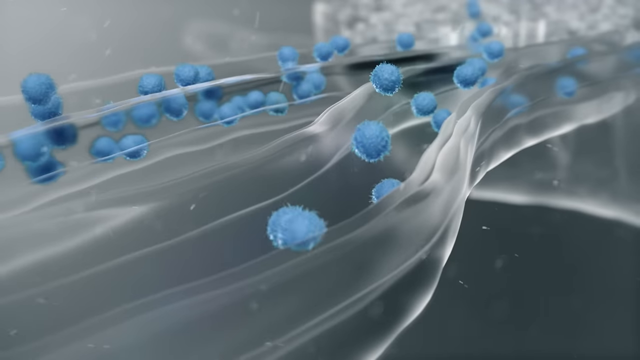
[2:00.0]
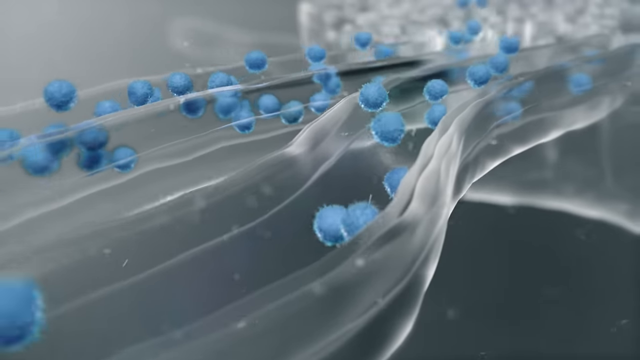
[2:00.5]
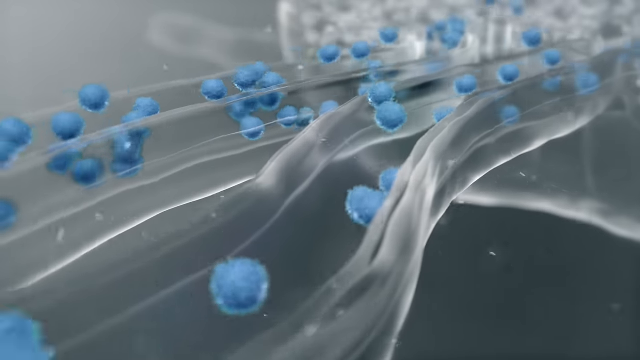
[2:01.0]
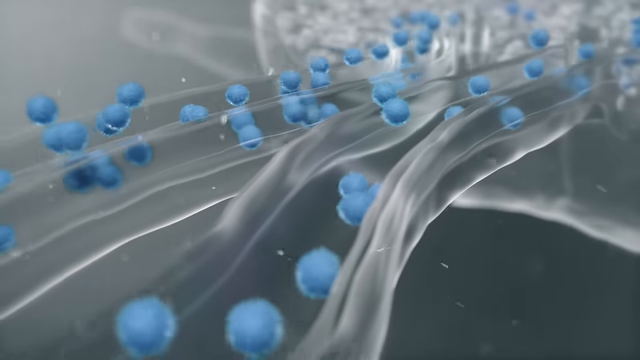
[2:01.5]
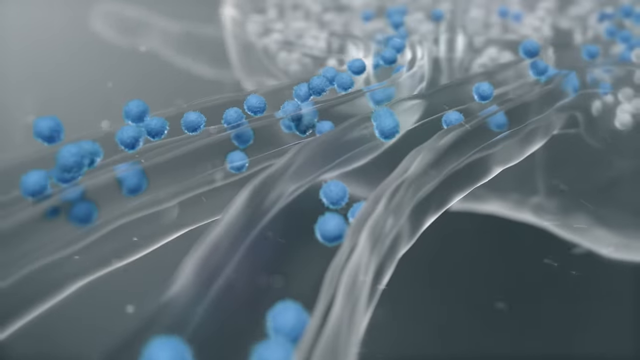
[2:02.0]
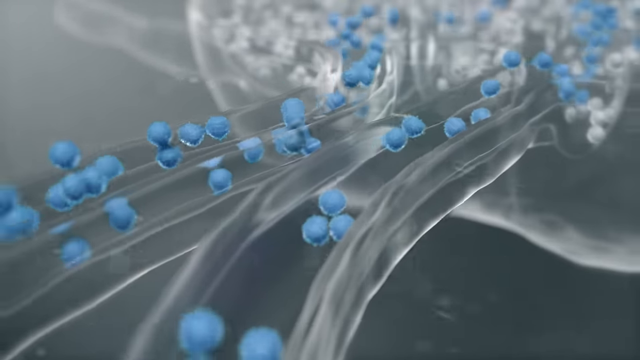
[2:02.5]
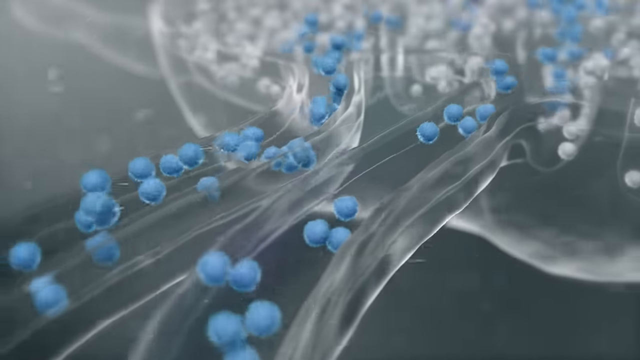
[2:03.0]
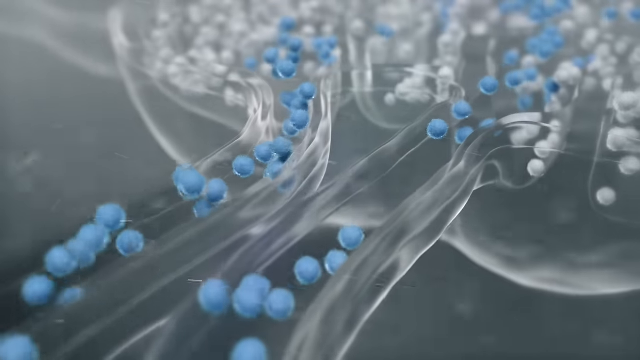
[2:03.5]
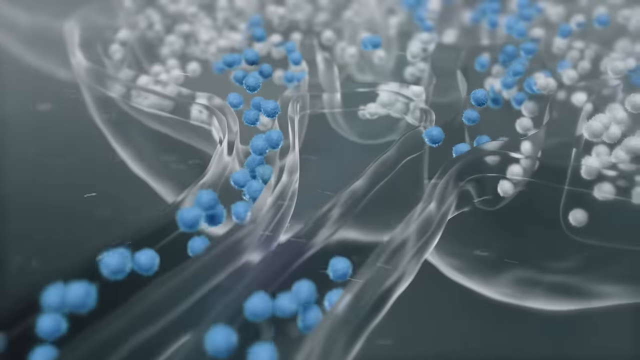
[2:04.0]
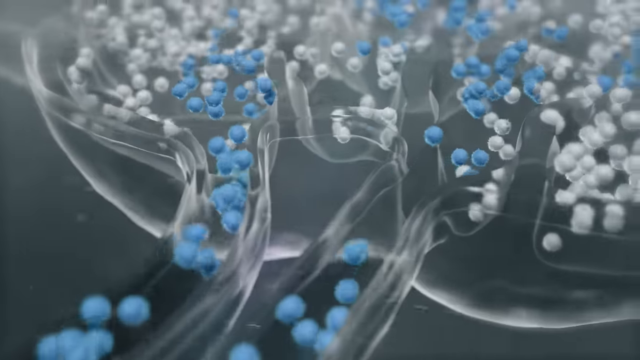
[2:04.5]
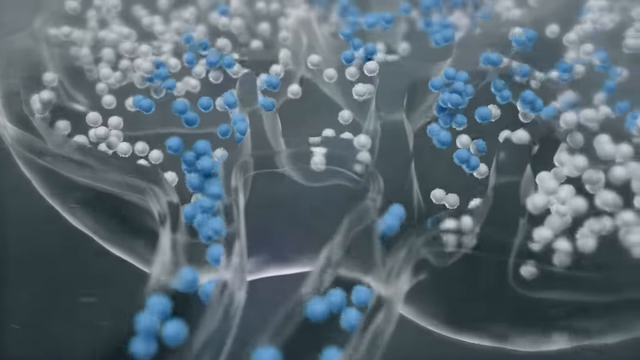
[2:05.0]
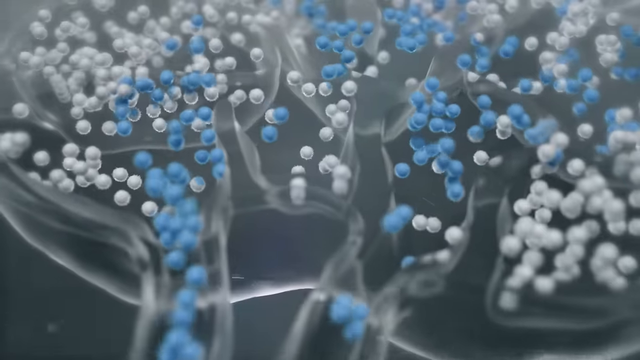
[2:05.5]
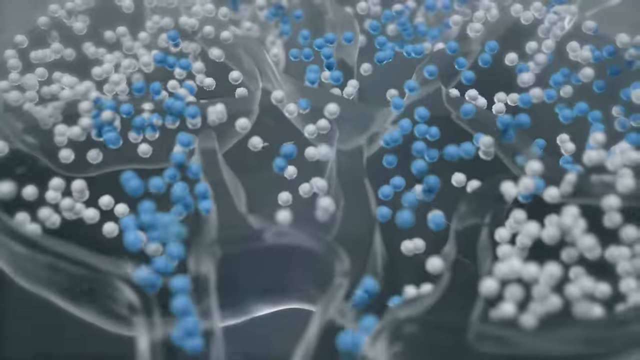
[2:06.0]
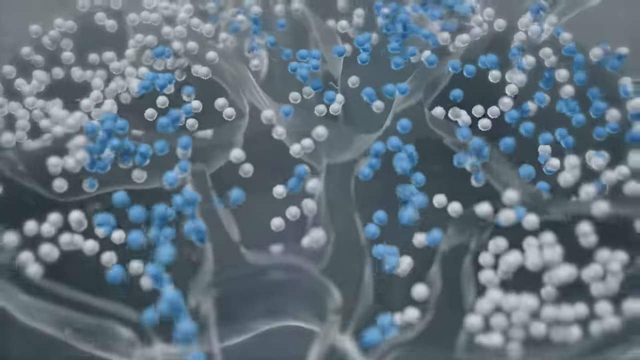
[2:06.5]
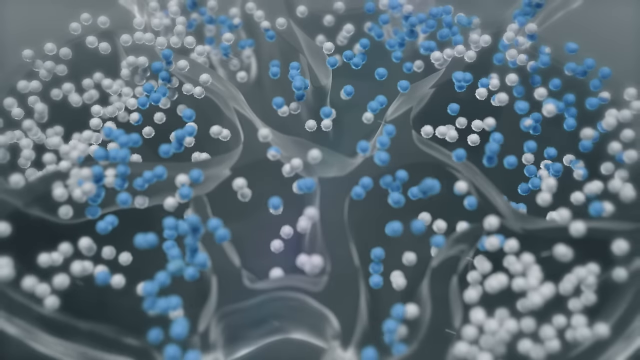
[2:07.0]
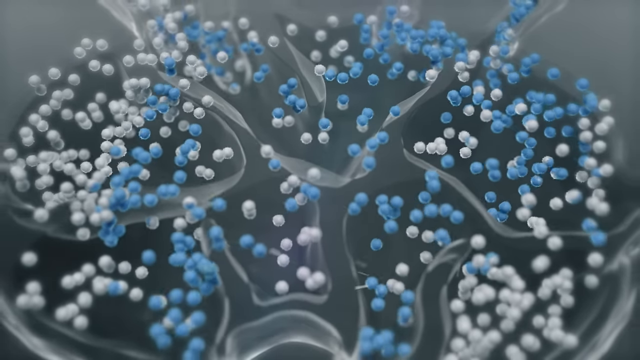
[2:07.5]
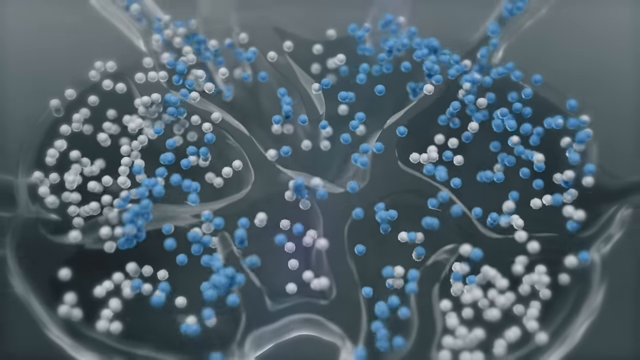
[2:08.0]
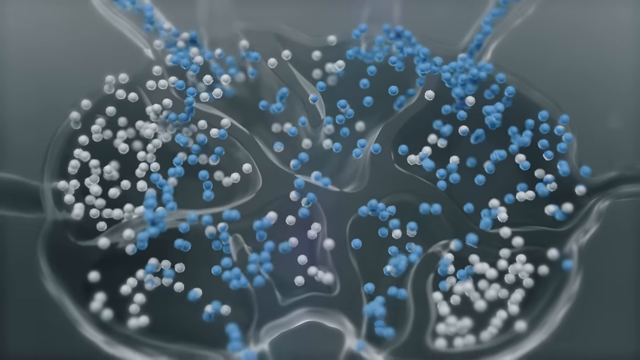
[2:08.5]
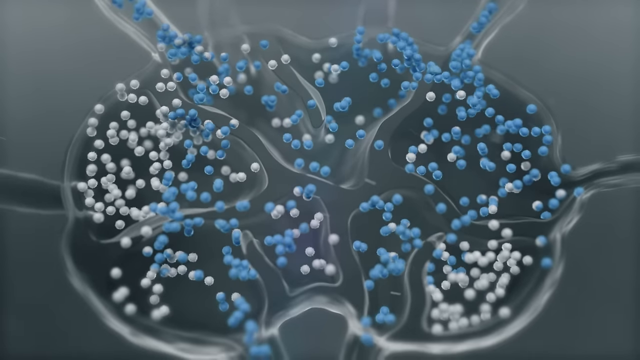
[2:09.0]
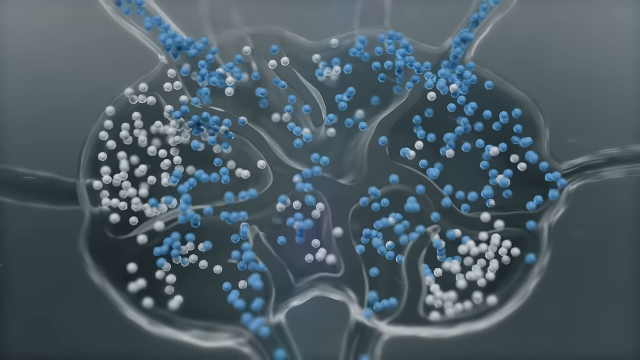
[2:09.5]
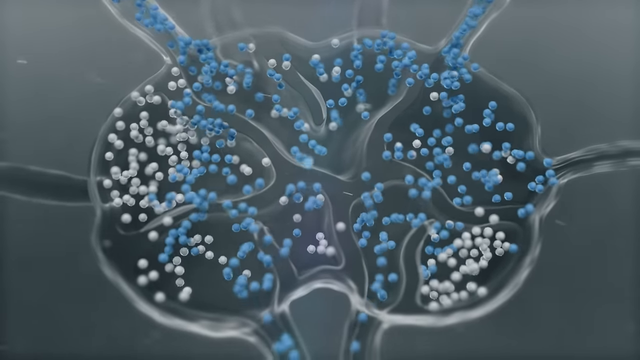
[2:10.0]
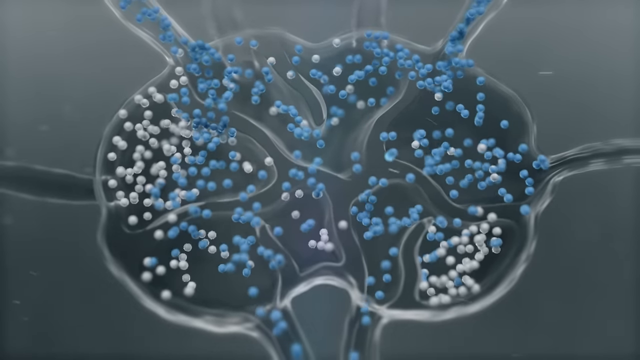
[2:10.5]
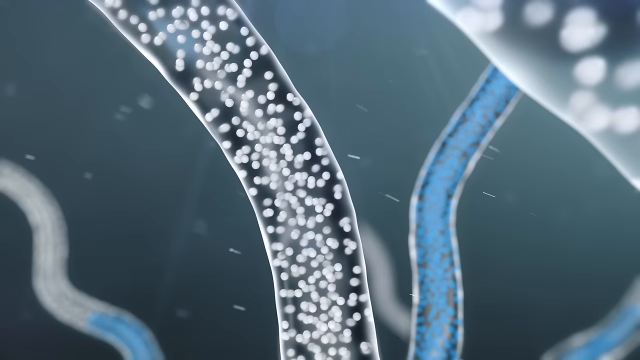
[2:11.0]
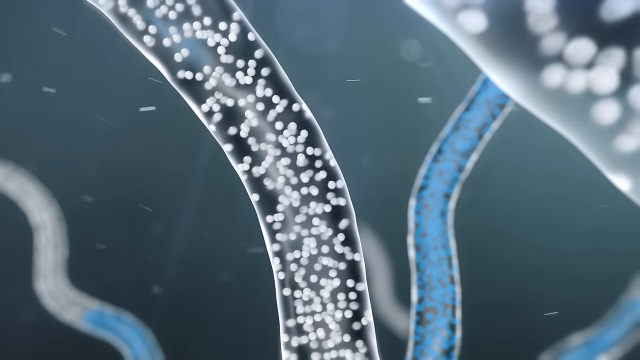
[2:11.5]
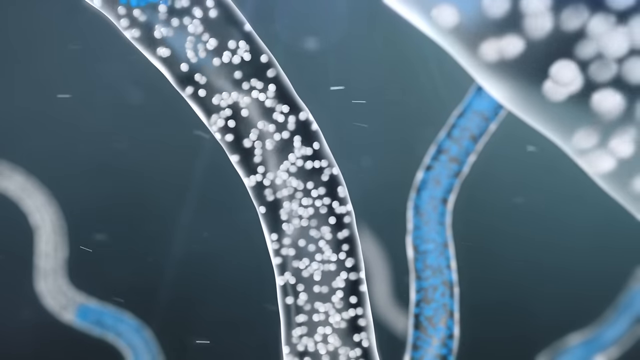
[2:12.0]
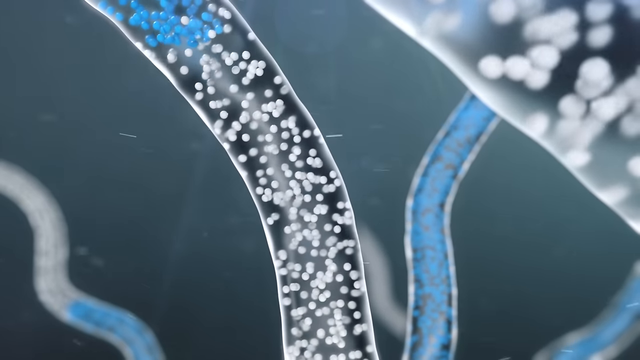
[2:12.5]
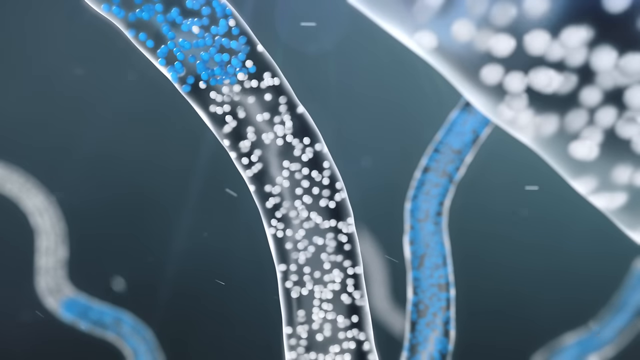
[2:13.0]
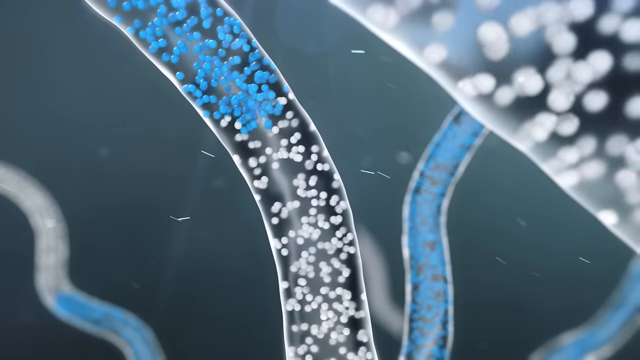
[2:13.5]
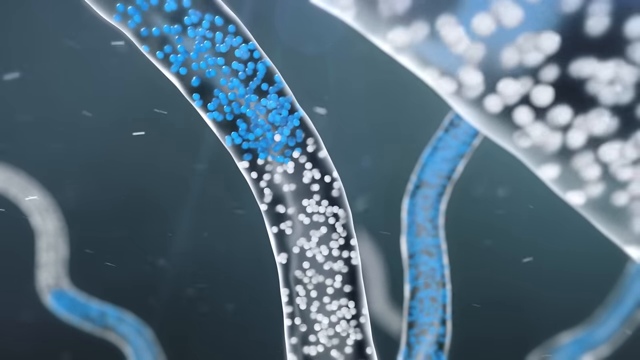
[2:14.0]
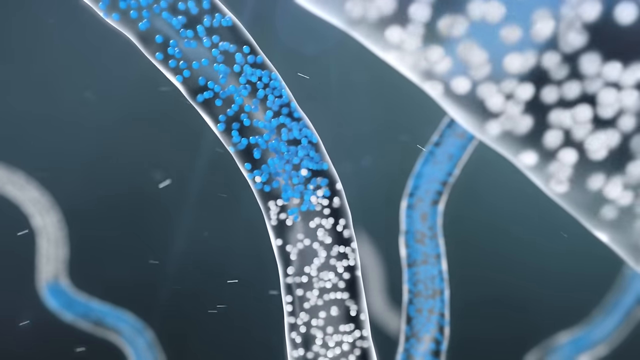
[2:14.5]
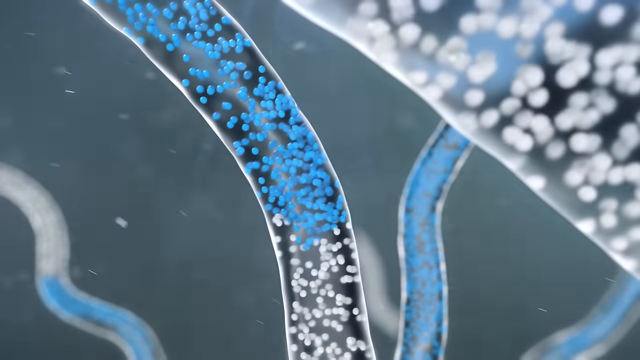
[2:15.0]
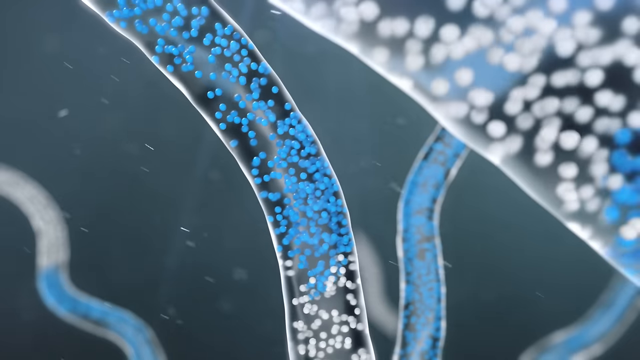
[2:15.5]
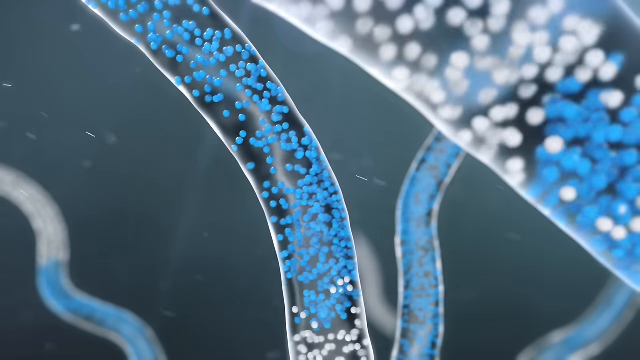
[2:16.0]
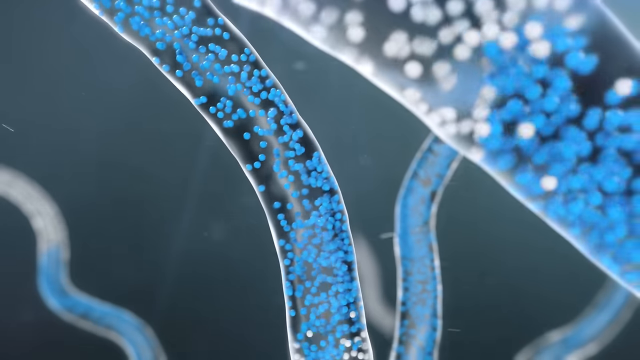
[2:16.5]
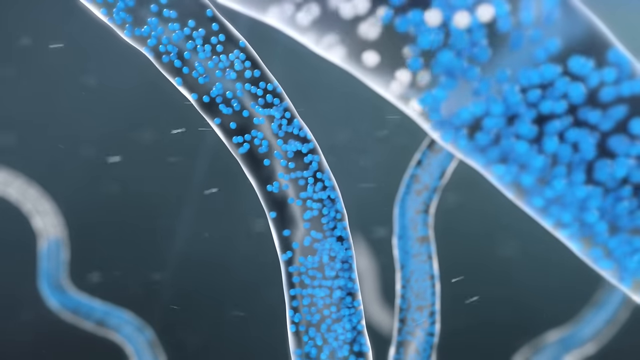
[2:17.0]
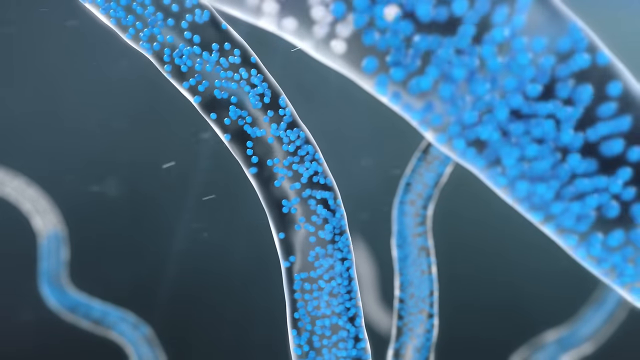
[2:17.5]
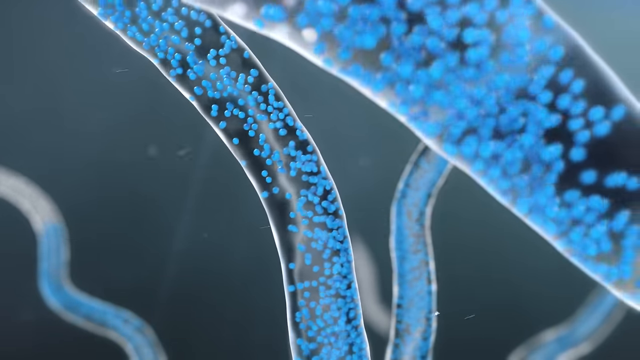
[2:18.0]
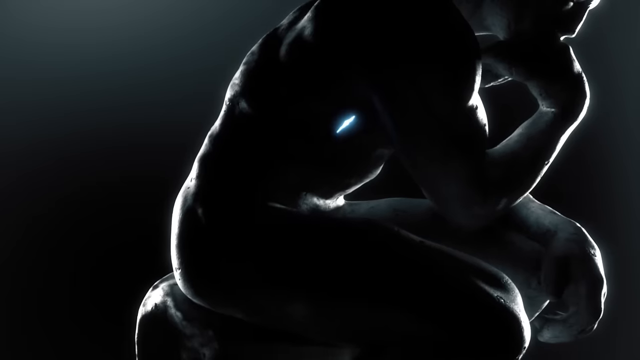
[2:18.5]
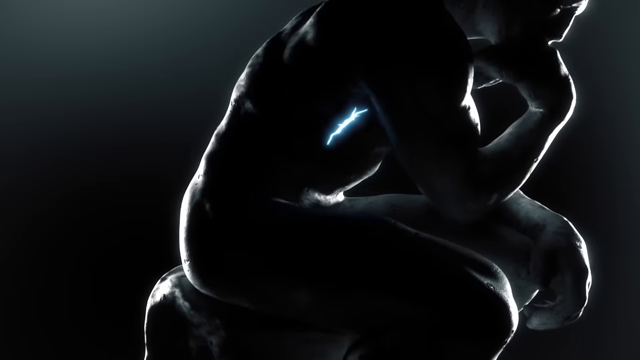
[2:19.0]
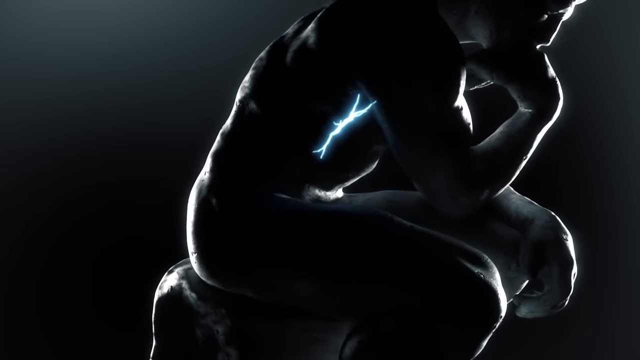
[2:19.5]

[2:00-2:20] Clear tubeways lead into a central area with a gridded, maze-like pattern and various tubes leading off from it. Some tubes seem to funnel small white balls and others small blue balls into the center. After a transition, tubes stand tall in stalks, one filled with blue balls and the other with white balls. Blue begins to go into the white-filled tube, and the balls all start to become blue as it passes through, as if the blue is overtaking the white ones and turning them blue. The video then transitions to an outer view of a gray background with what appears to be the Thinker statue, the man hunched over with his chin on his hand on his bent wrist, and blue light expanding through the inner portion of the statue's body.